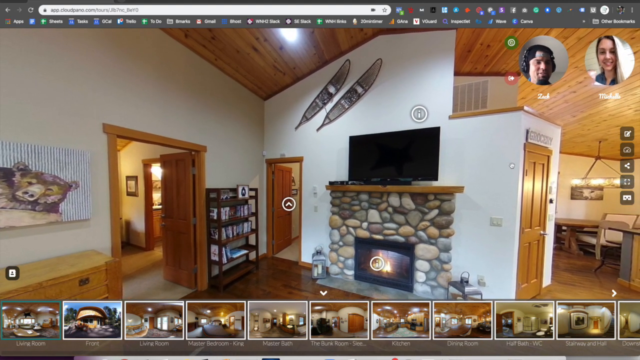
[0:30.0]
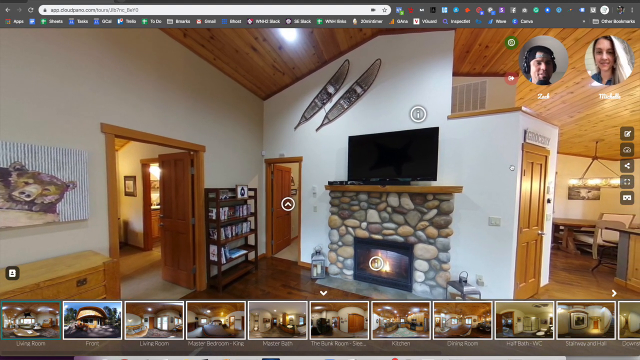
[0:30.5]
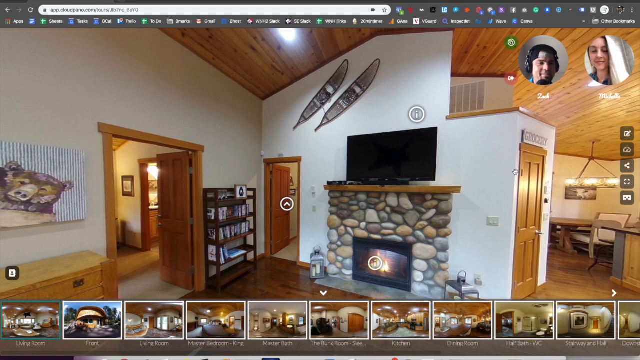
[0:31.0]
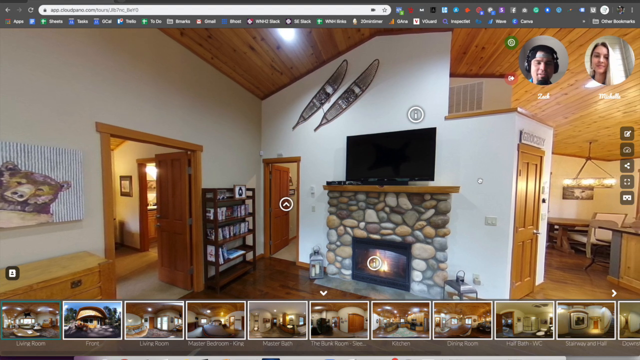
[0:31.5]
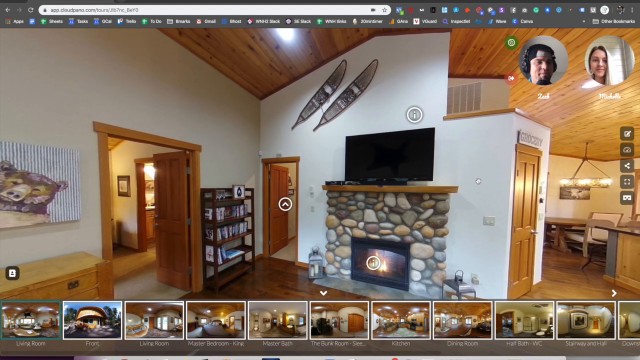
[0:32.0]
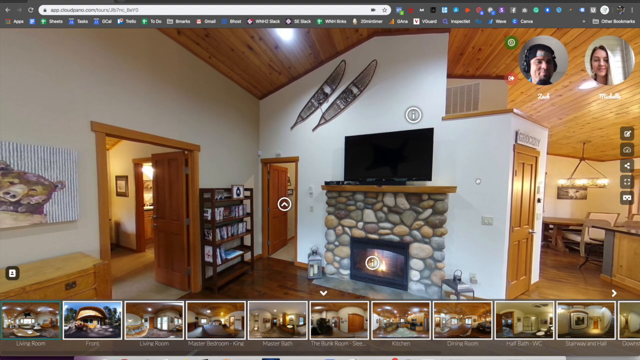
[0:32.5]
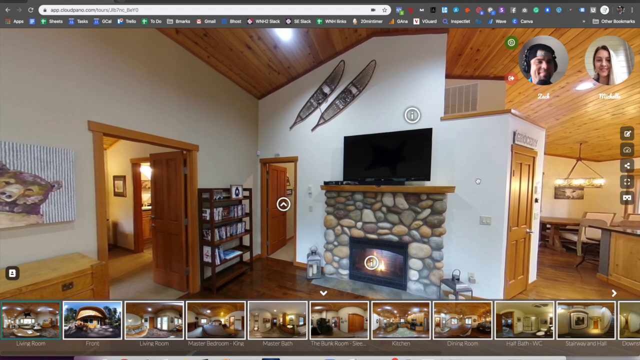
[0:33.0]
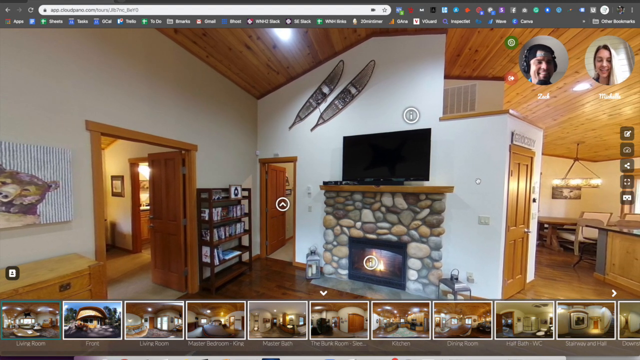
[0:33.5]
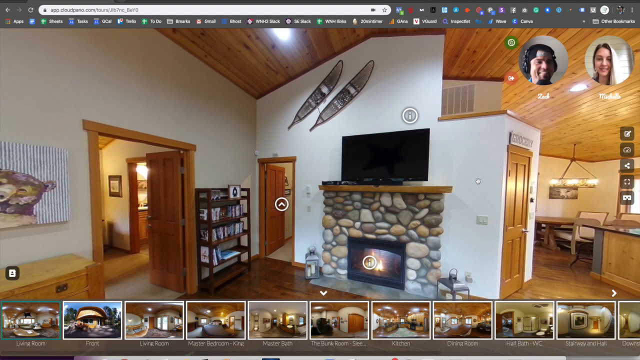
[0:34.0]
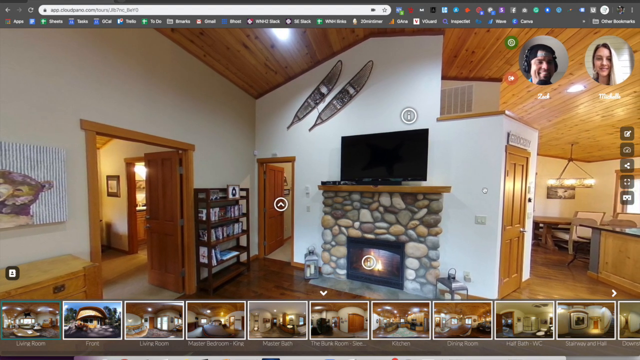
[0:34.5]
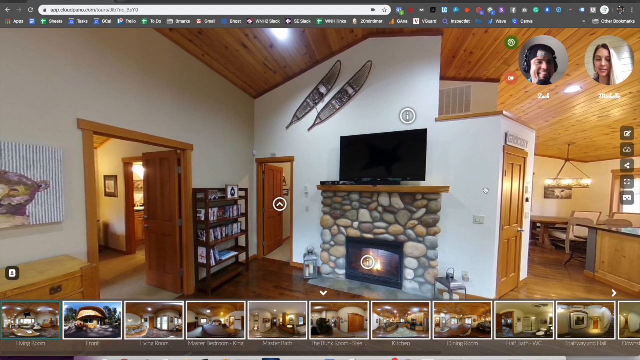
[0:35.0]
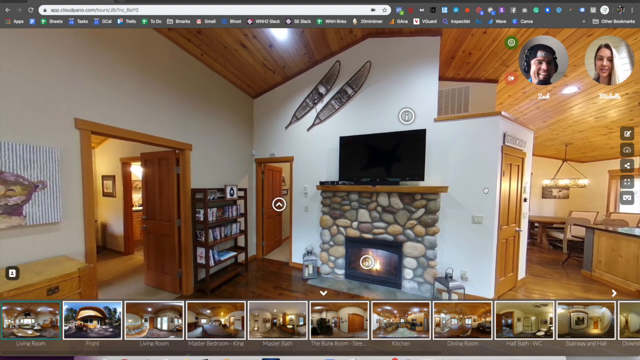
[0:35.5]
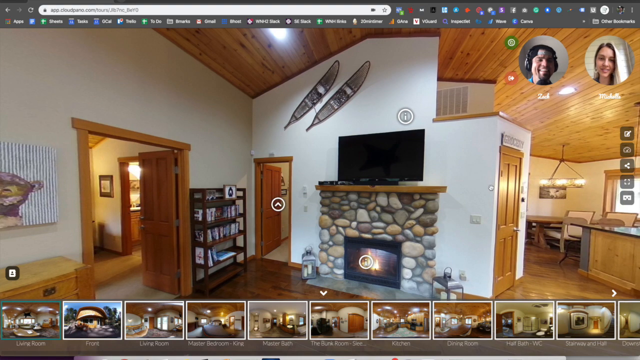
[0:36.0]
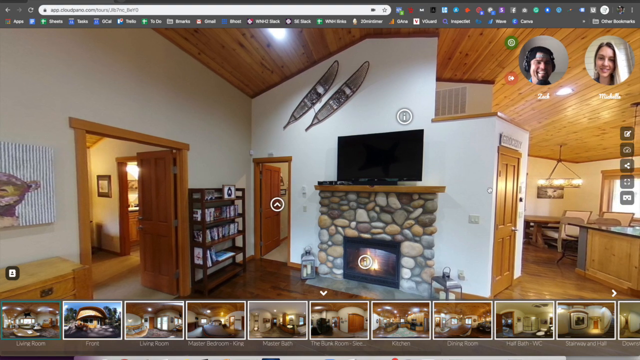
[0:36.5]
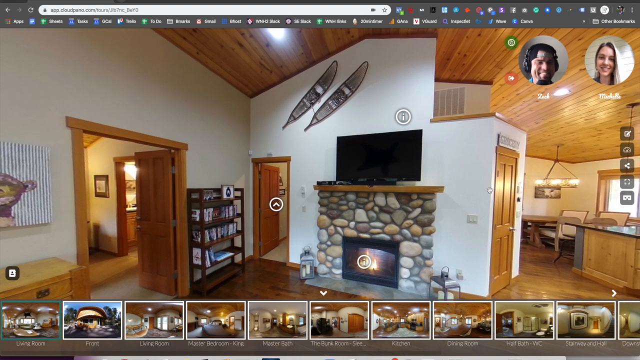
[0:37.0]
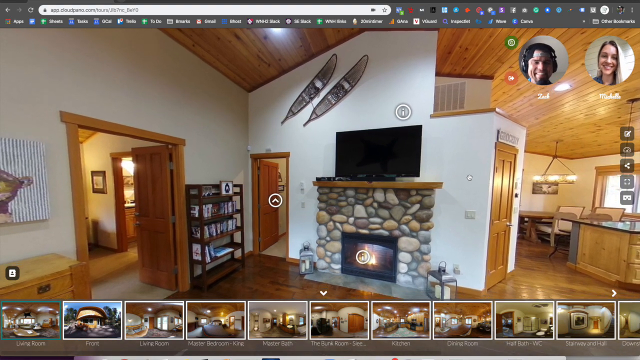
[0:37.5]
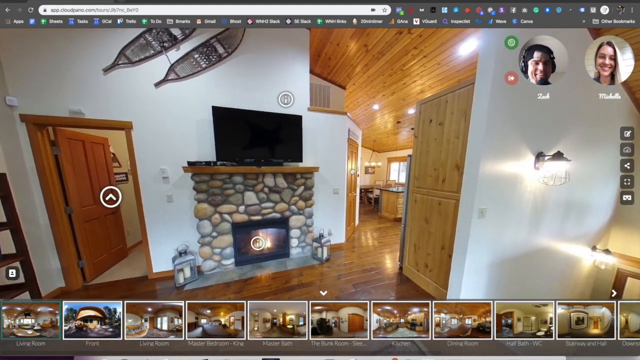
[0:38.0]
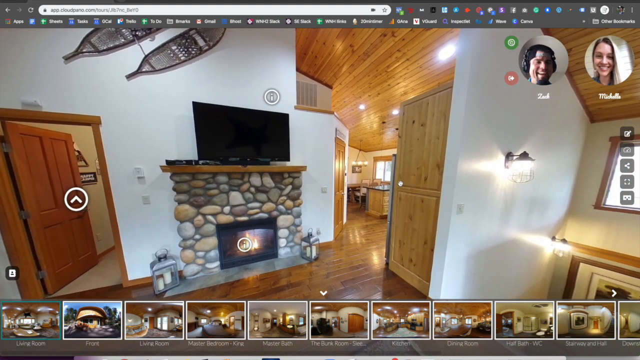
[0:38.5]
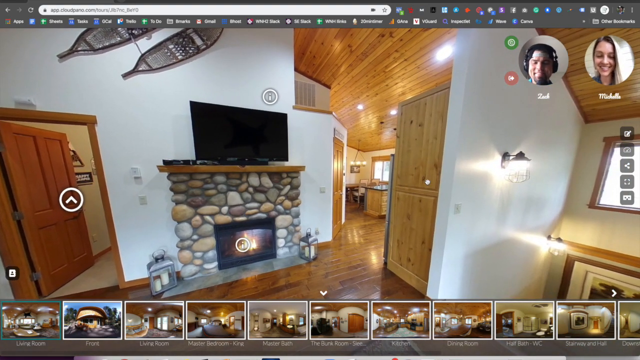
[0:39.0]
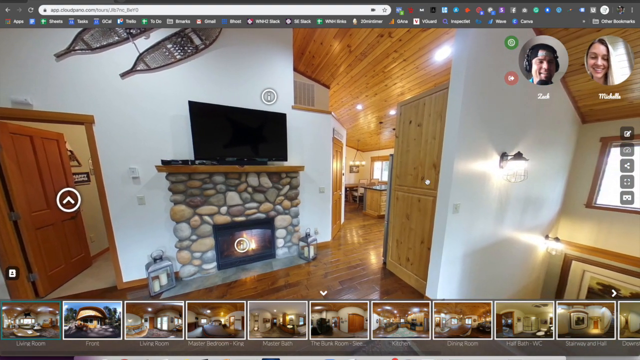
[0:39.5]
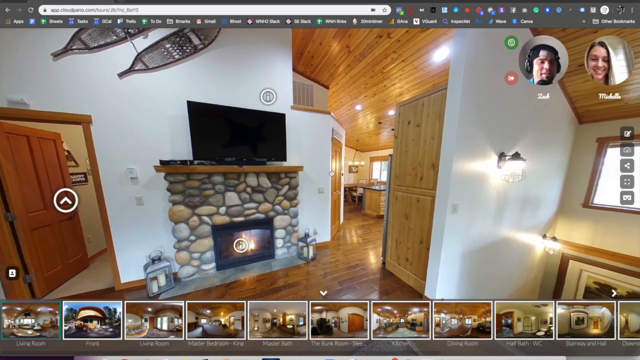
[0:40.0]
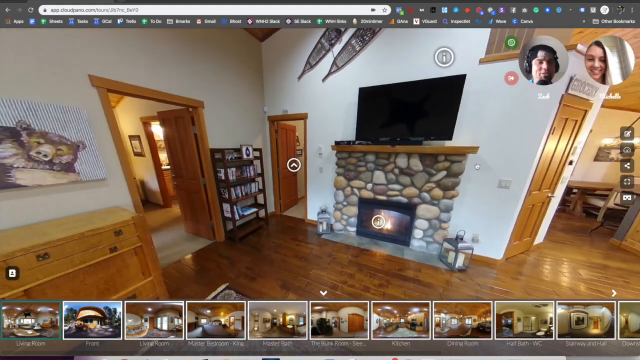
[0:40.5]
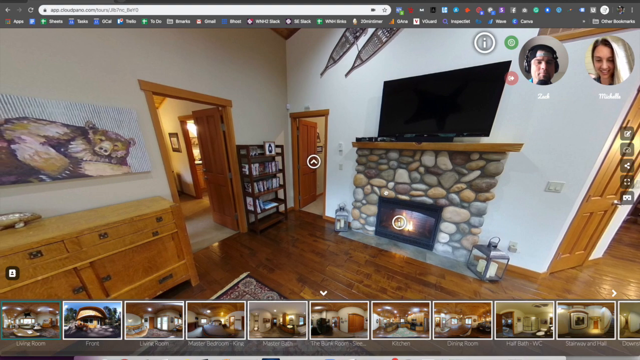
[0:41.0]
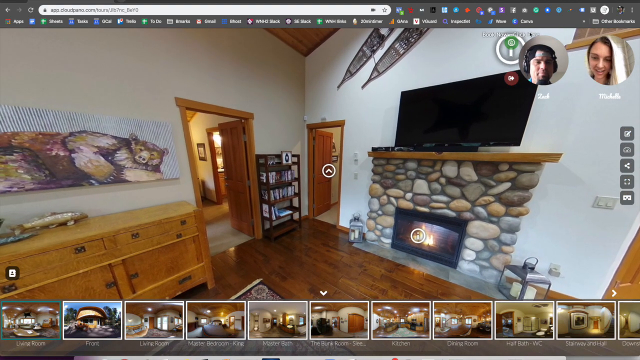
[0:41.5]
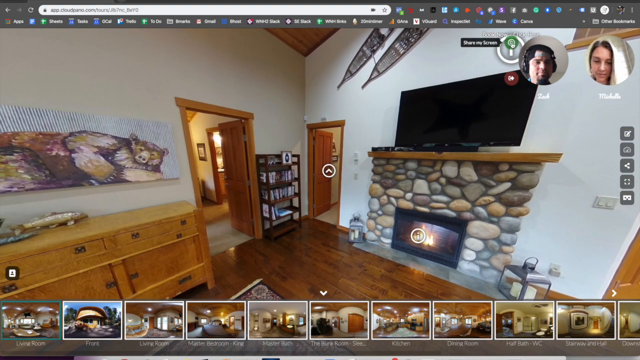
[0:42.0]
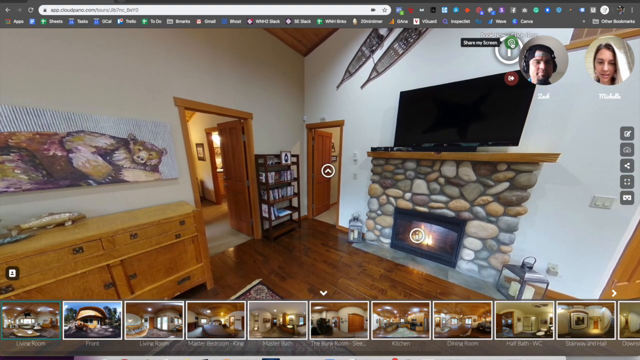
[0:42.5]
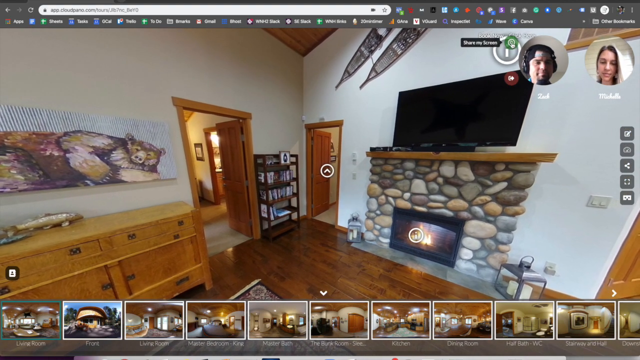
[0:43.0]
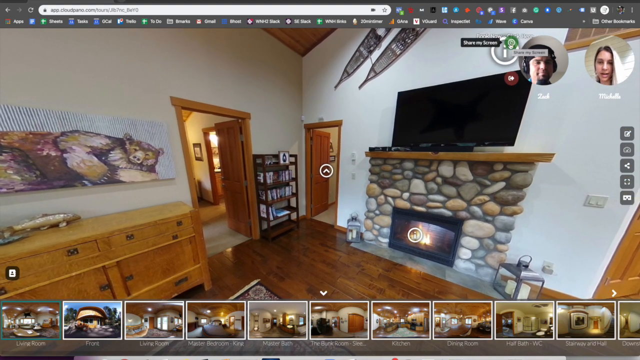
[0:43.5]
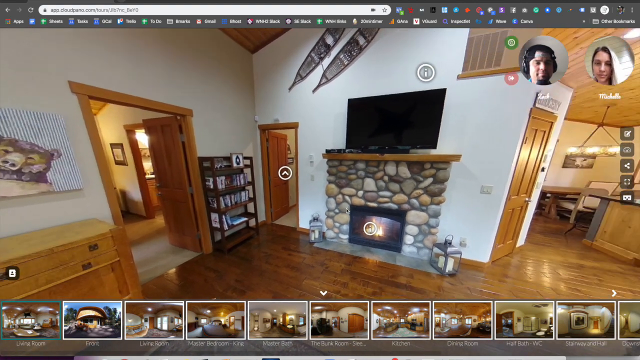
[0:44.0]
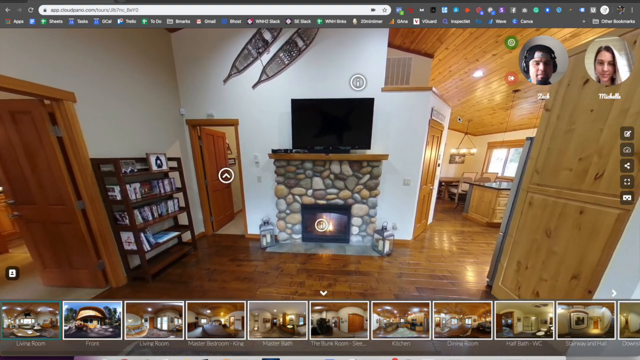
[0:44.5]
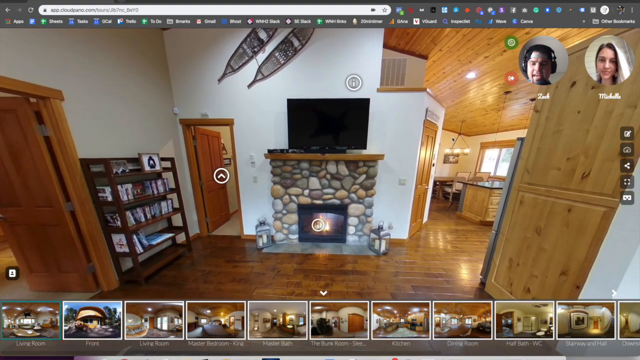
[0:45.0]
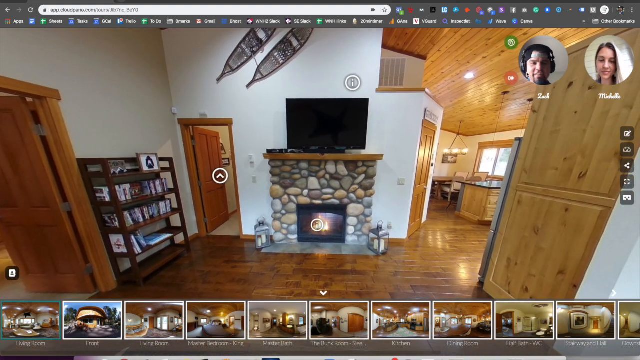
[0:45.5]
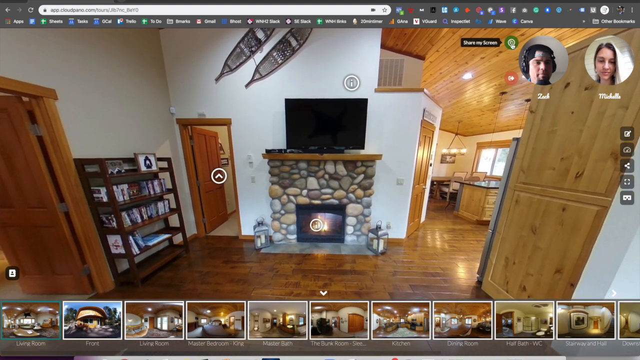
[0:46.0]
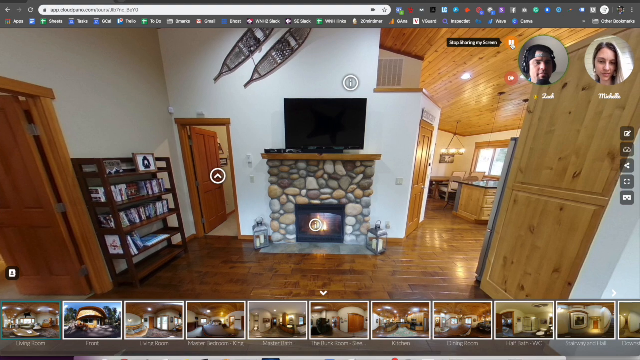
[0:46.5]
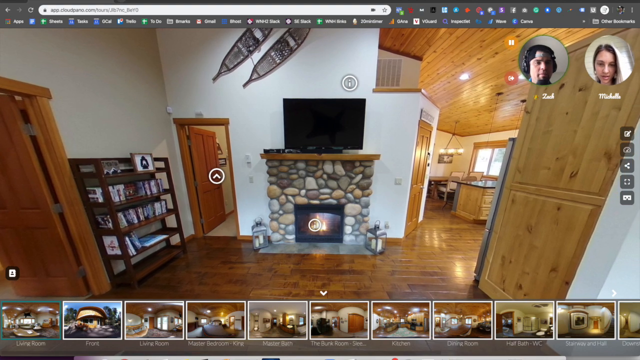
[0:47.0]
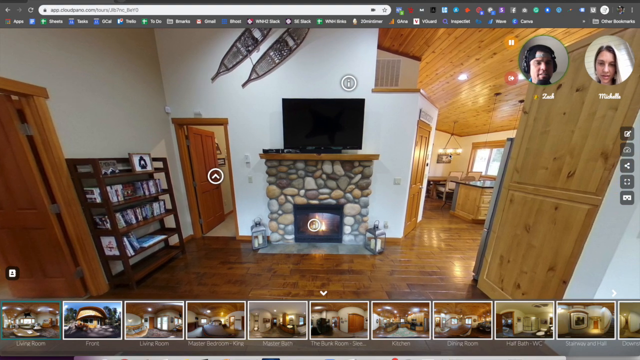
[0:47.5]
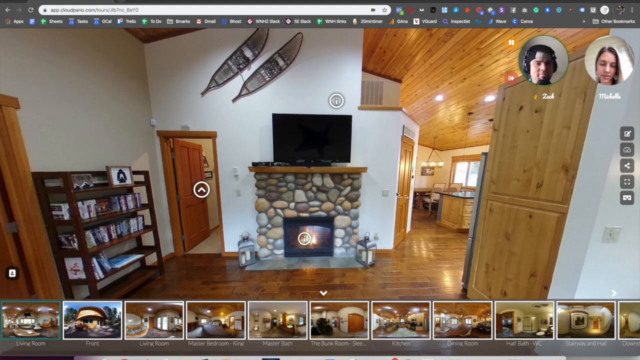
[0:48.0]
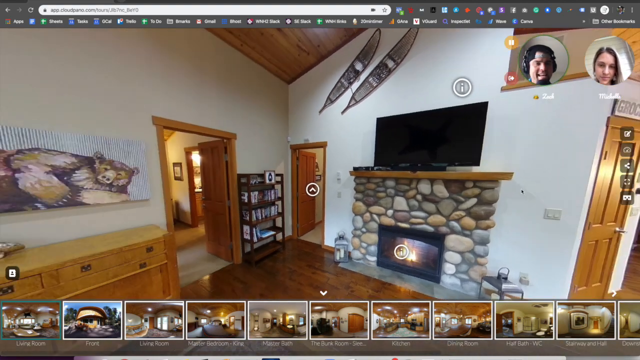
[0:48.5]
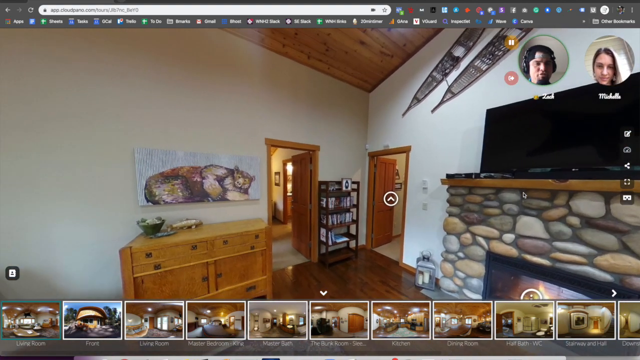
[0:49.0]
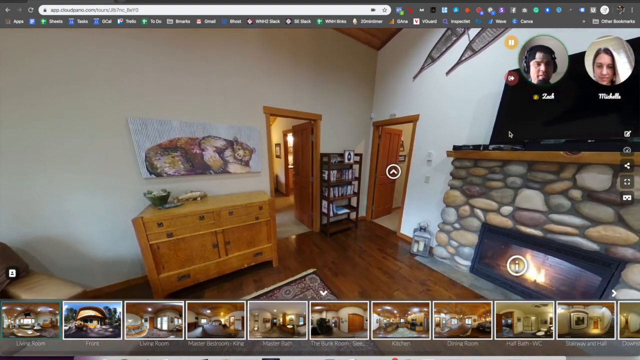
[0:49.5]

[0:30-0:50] Two people are playing virtual reality, and the house they are in looks kind of like a wilderness house, maybe a log house. It has high ceilings and a stone fireplace with a flat screen TV sitting on top of it. The two players are in the upper right-hand corner: on the right is a girl named Michelle with long blonde hair, and on the left is a man named Zach with black, curly hair and a little facial hair. The ceiling of the house is all wooden, and there are kind of hanging lights in a few places. The two players converse with each other, their mouths opening and shutting as the camera turns positions. There is a room off to the left, a smaller room toward the middle that may be a bathroom, and a door over to the right that possibly leads to another level.